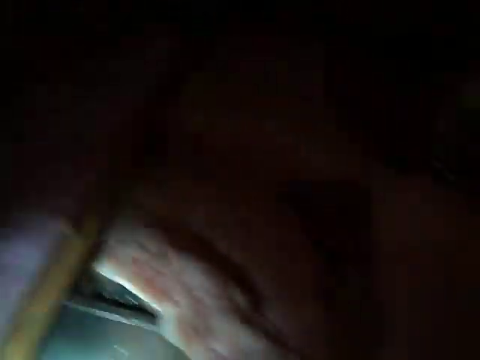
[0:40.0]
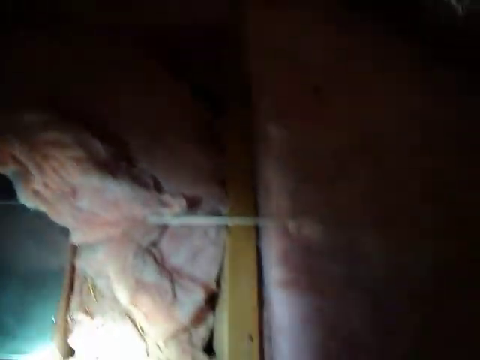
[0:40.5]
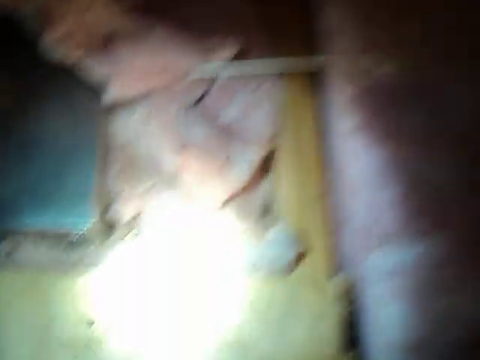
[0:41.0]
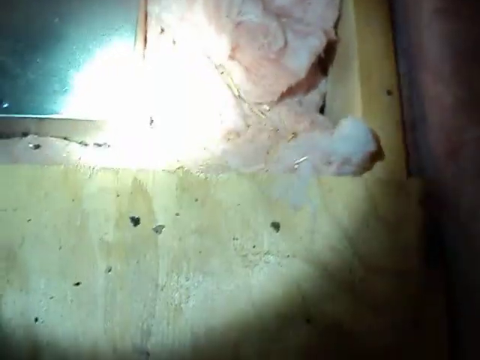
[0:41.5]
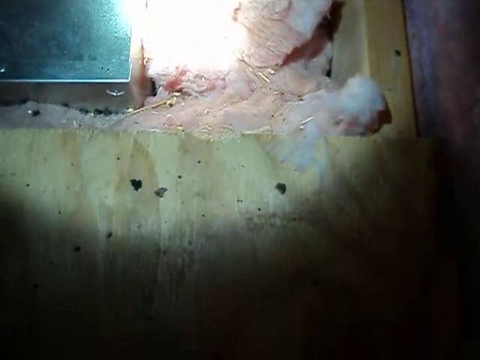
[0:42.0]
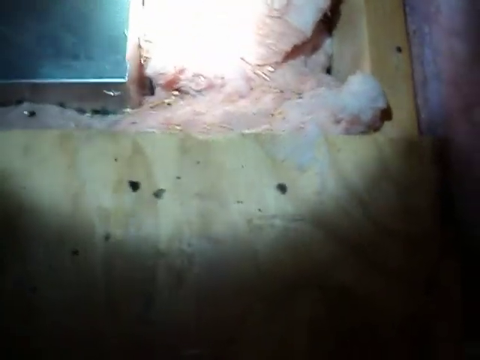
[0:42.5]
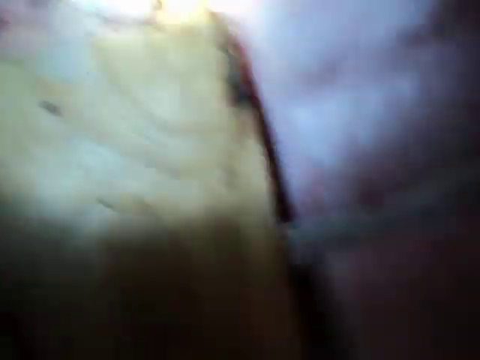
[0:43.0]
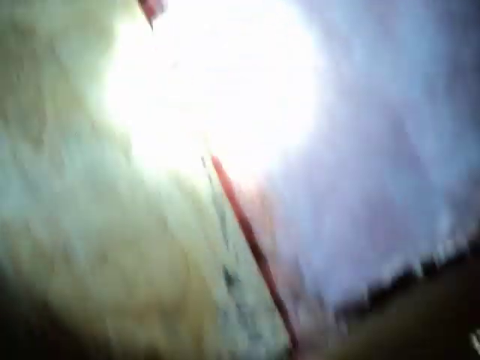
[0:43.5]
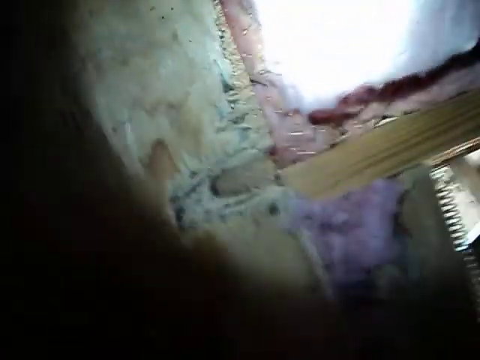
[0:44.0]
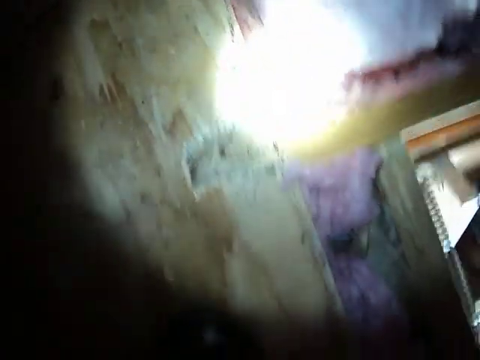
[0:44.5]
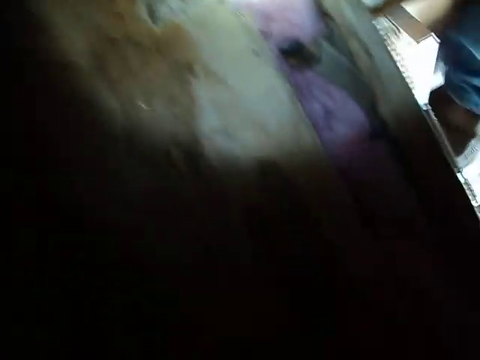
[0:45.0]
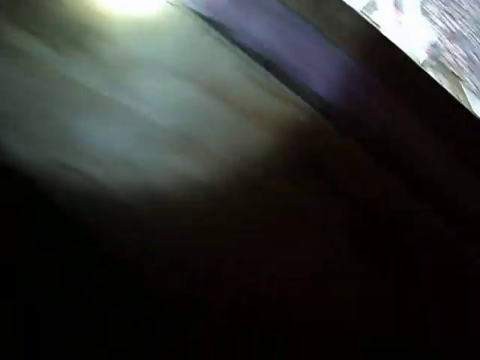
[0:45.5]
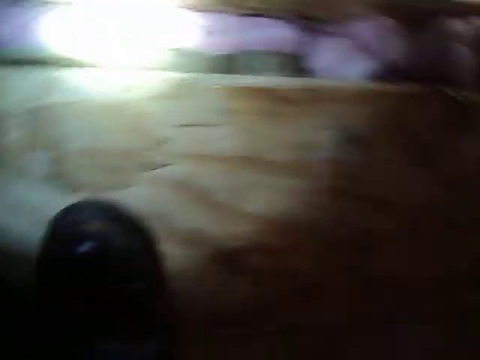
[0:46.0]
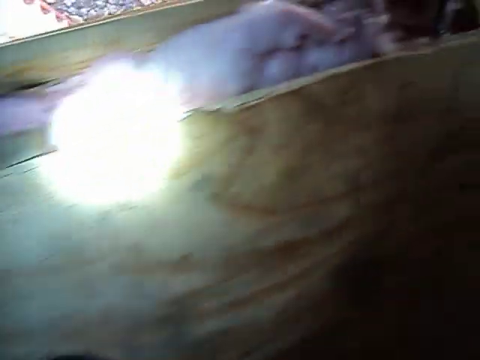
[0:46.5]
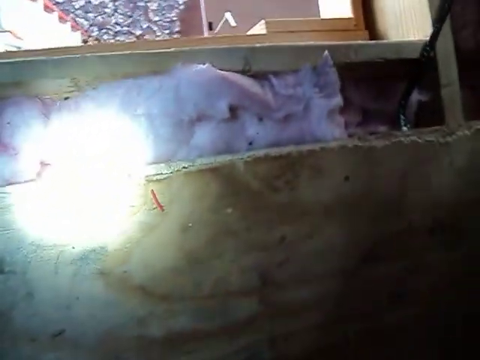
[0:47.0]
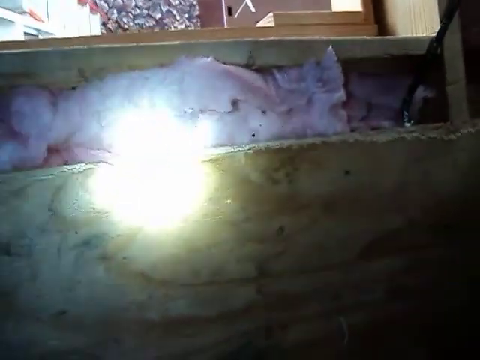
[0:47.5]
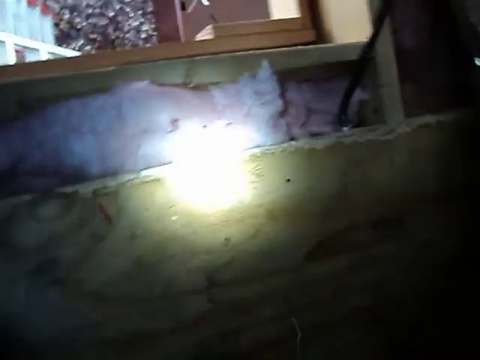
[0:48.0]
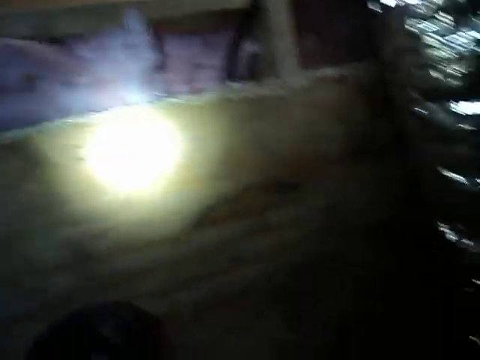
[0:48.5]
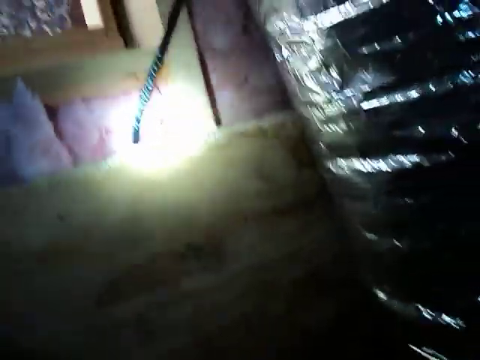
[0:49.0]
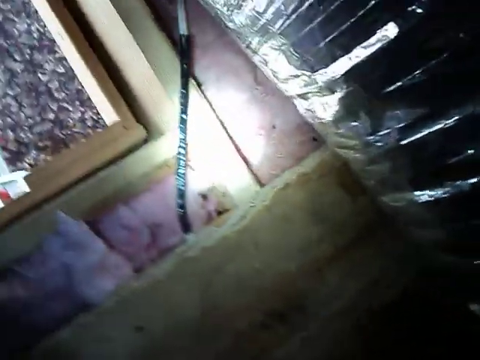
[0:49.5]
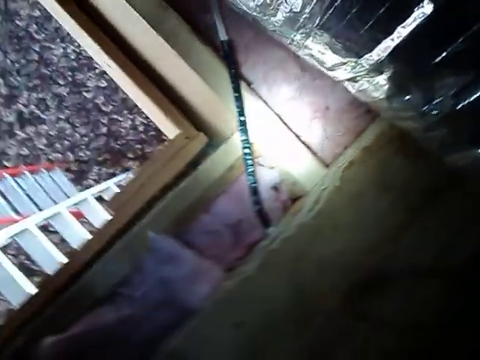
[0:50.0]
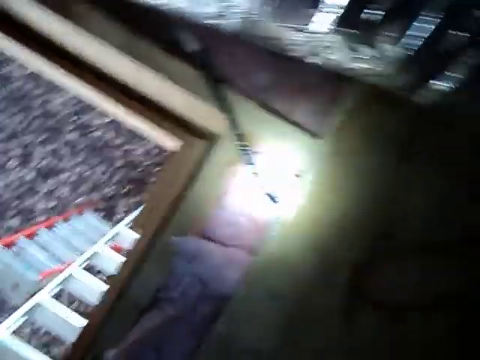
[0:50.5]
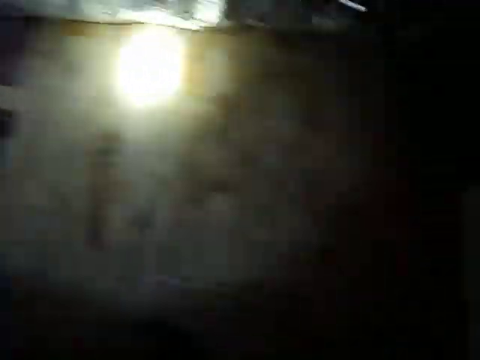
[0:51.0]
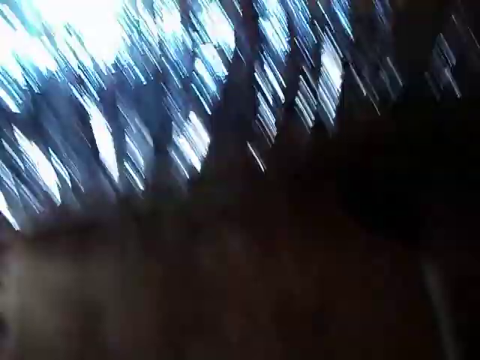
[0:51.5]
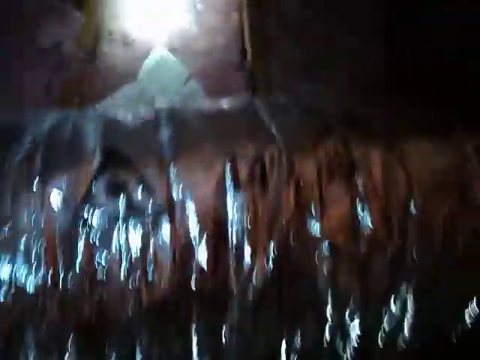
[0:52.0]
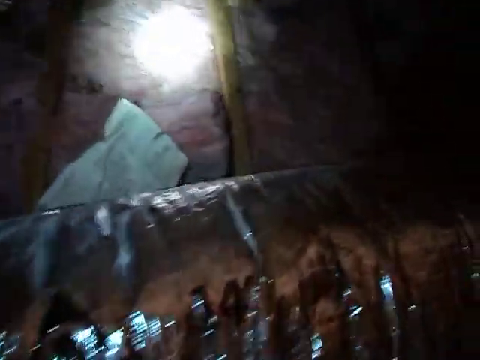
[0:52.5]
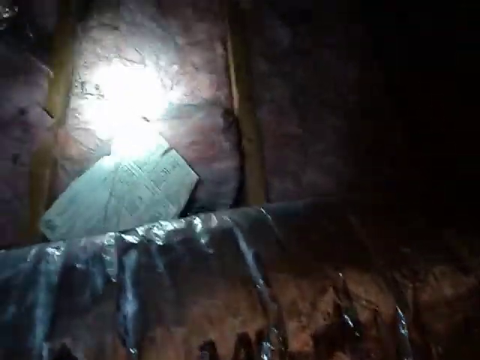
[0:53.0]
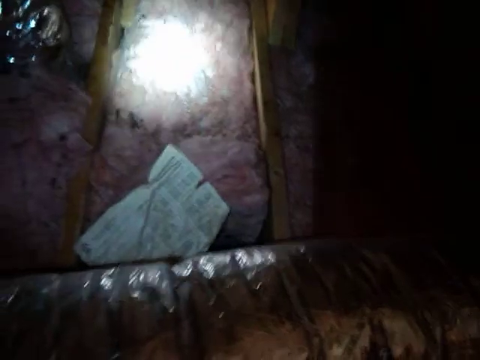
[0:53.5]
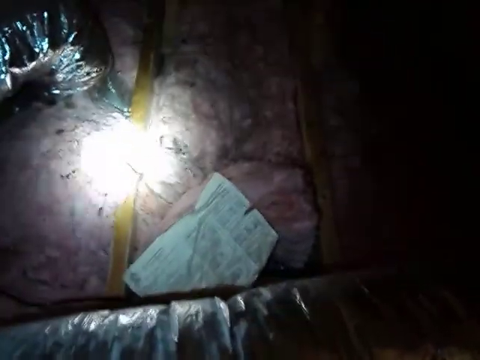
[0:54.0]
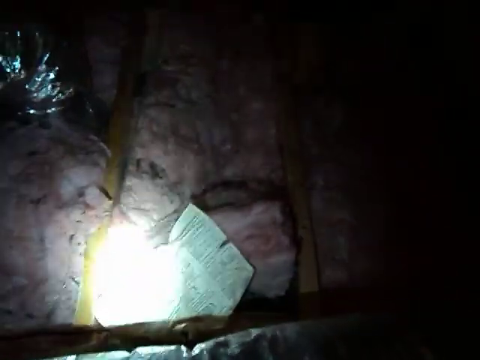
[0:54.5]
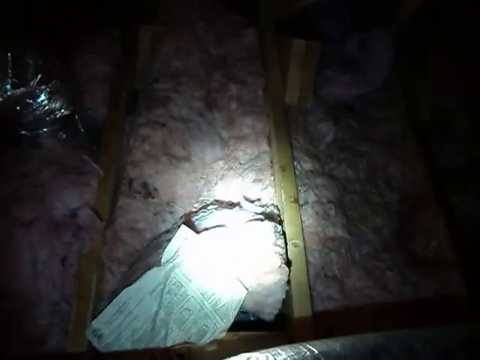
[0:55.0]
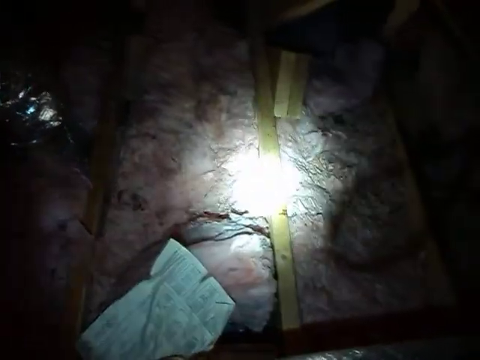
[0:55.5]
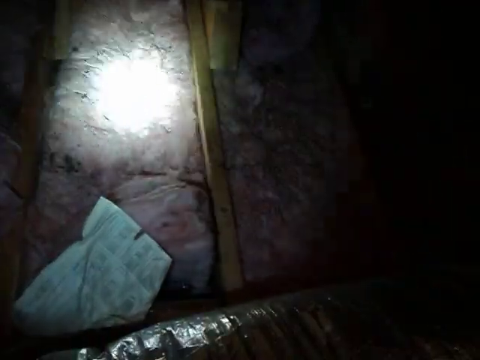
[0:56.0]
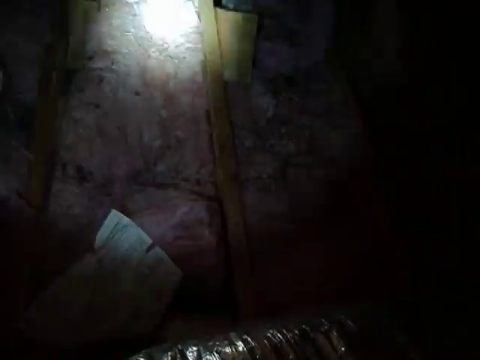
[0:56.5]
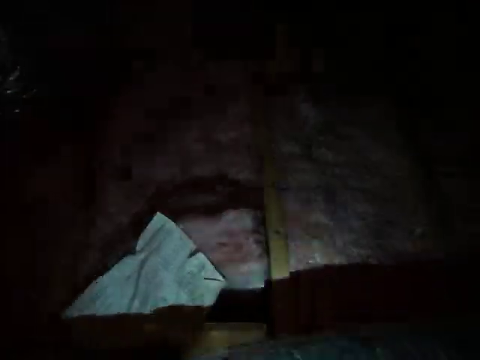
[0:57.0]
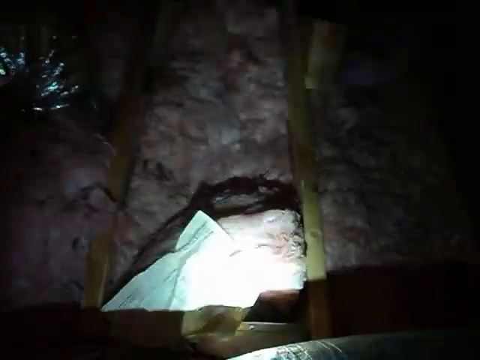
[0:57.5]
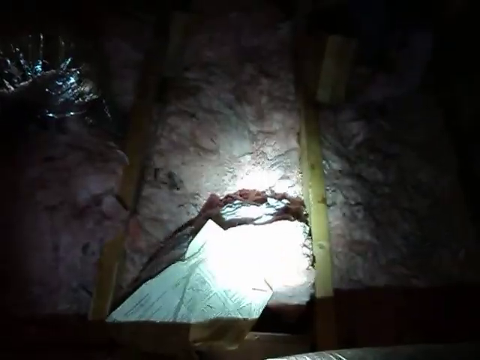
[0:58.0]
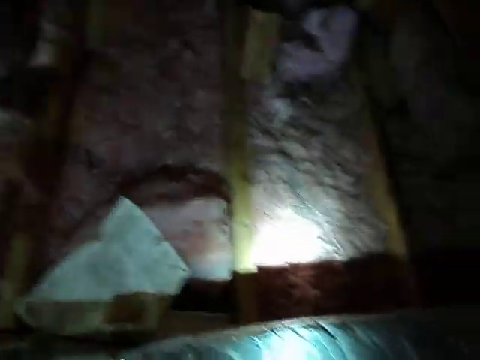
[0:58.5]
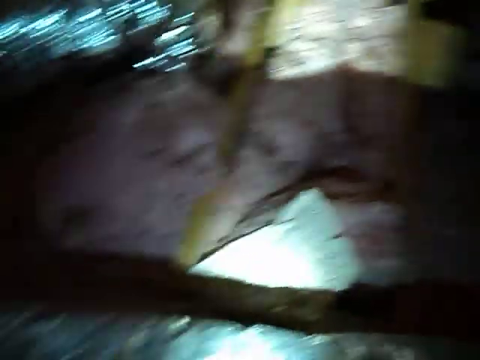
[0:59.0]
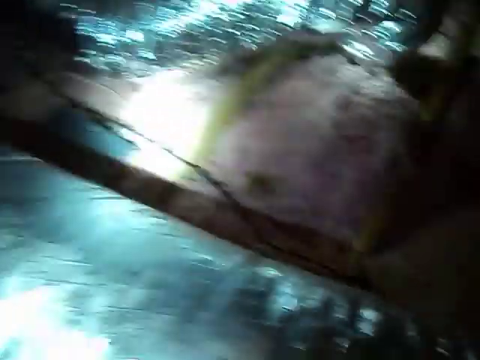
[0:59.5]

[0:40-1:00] The video is filmed in what looks like an attic space with hardly any light except what looks to be a flashlight. Someone holds the camera, which moves around a lot, and aims the flashlight beam at different parts of the attic. The light points downward, showing the floor joists with pink batt insulation in between. The person with the camera starts to somewhat zoom in on the floor and traces the flashlight around the edge where the batt insulation meets the plywood. They step over, giving flashes of their shoe, and trace the flashlight all the way down one of the floor joists, over by a silver air conditioner duct. The flashlight then moves up and over to the other side of the duct, where there is more insulation.